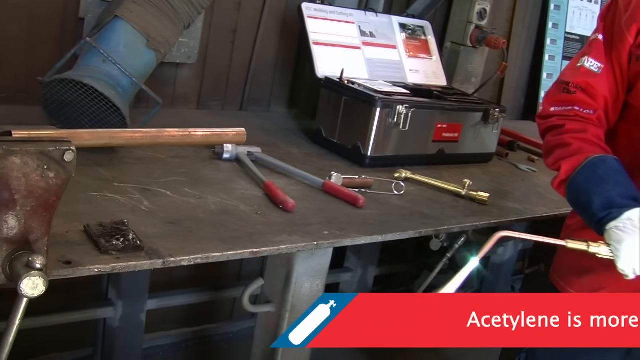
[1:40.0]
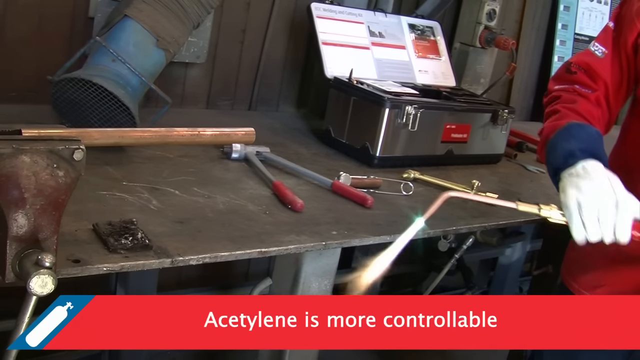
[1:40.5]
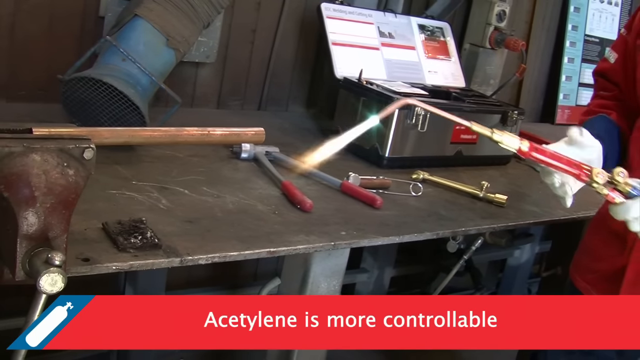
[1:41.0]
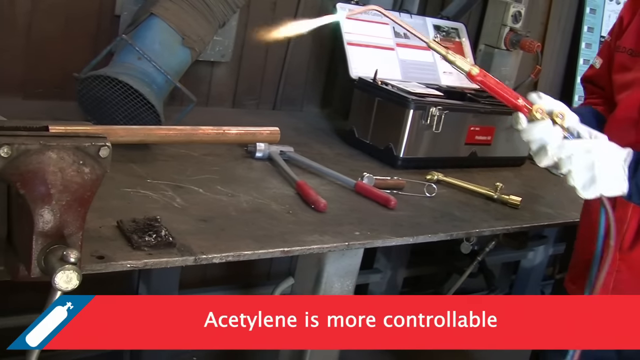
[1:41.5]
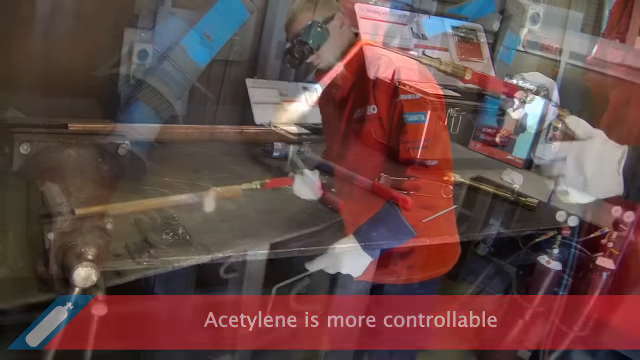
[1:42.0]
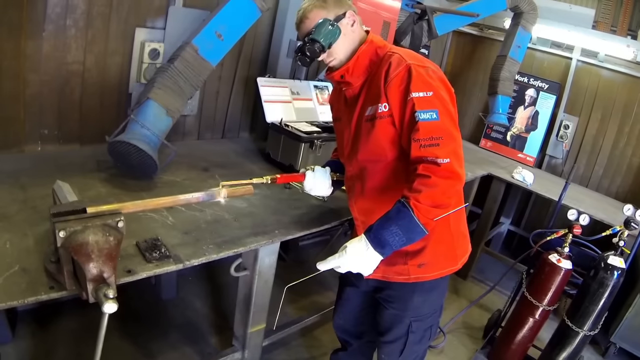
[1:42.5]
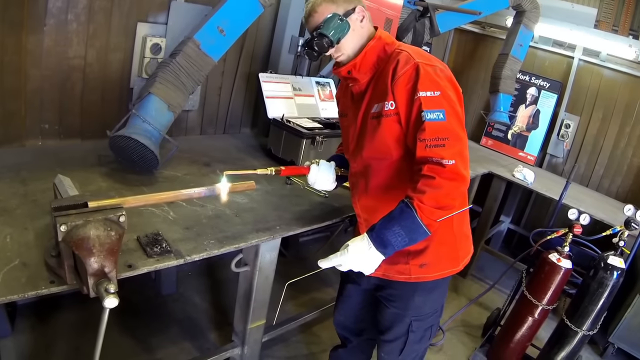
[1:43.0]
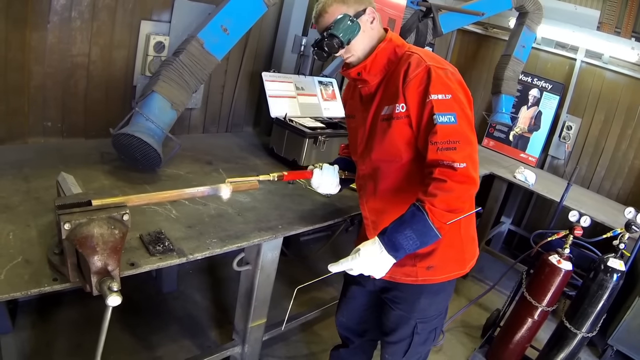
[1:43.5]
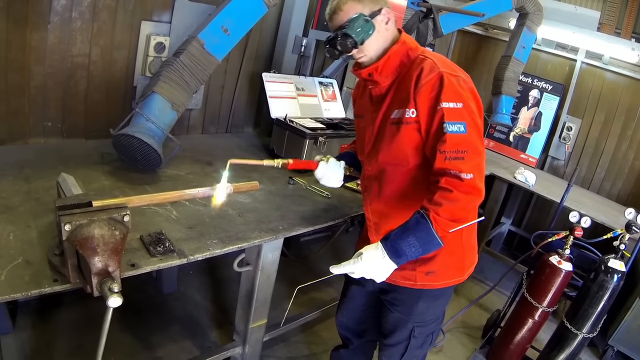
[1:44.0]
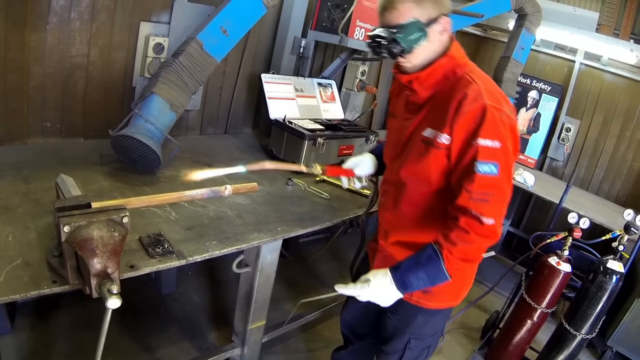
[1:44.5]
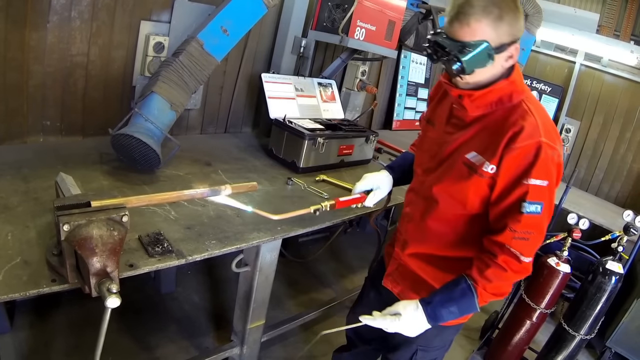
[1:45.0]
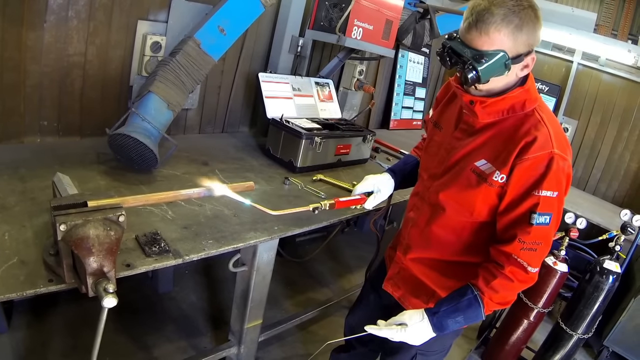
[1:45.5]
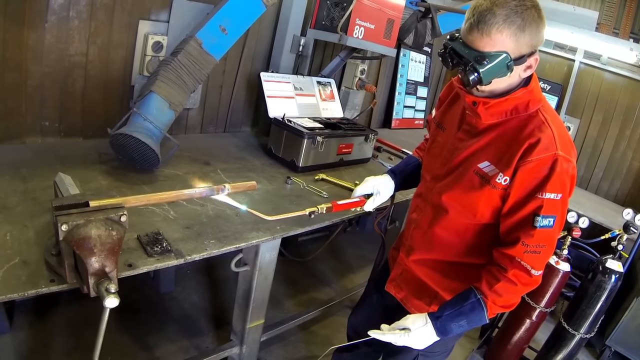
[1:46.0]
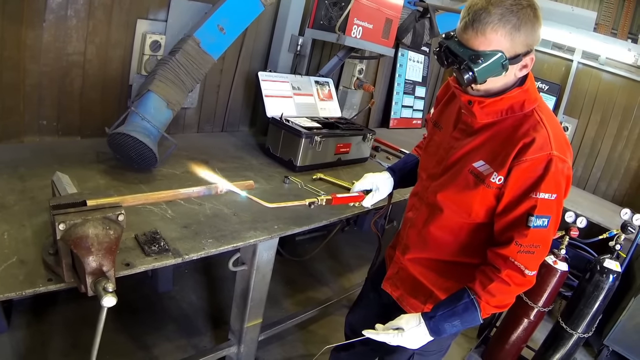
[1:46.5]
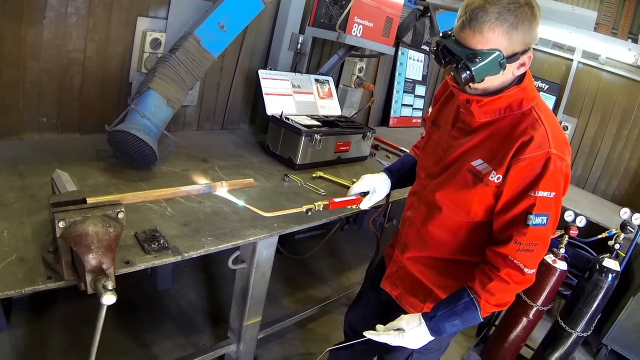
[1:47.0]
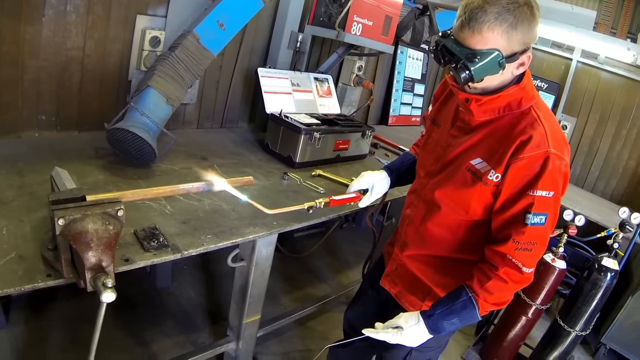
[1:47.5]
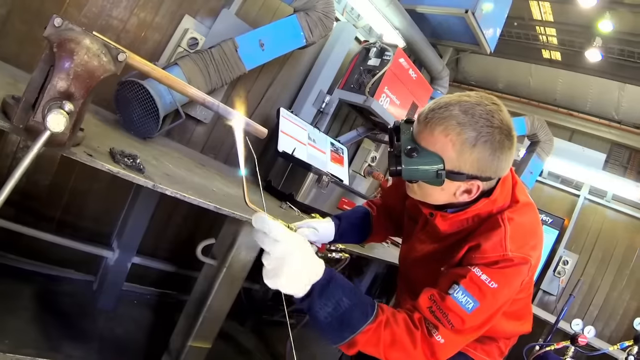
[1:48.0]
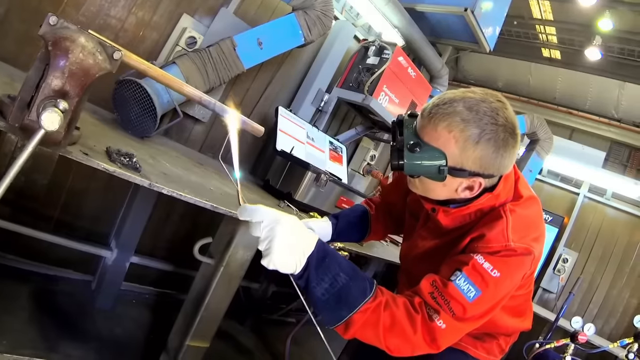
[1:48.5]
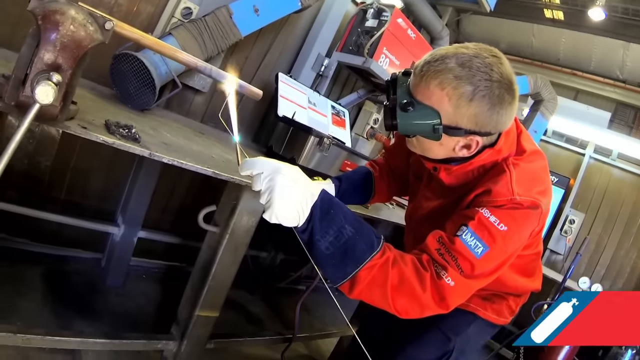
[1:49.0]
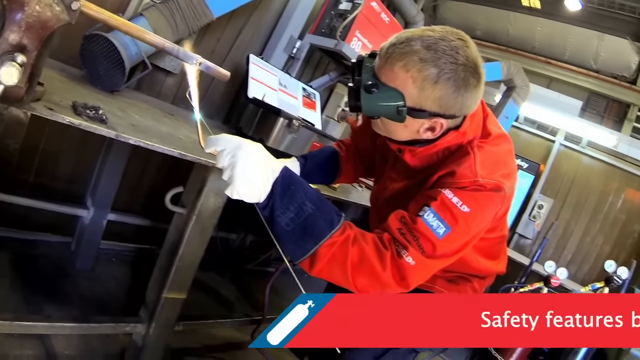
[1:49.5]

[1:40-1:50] The man makes the flame a little higher, and text reads "acetylene is more controllable." He then uses the flame on an object held in a vice, which looks like it is holding a long, thin pipe. Text at the bottom reads "safety features built-in." The man wears a red safety jacket and blue and white gloves, with safety goggles strapped around his head. He is a white man with light blondish-brown hair.